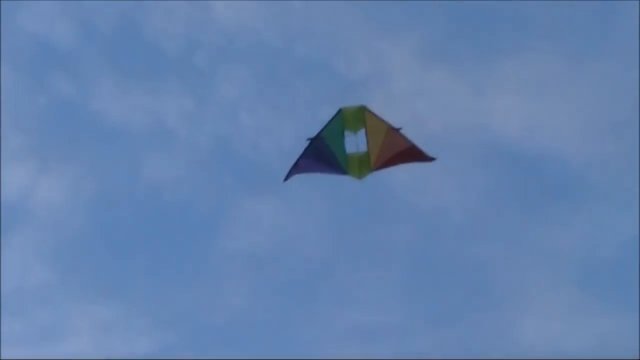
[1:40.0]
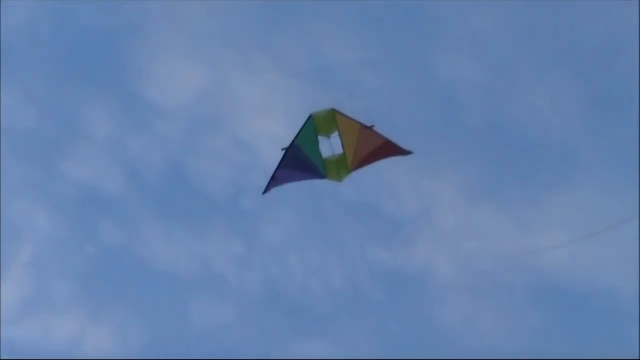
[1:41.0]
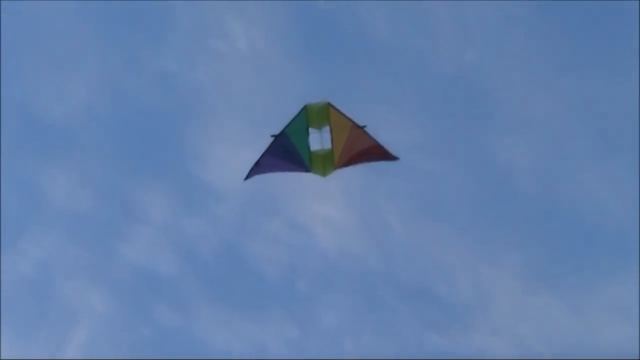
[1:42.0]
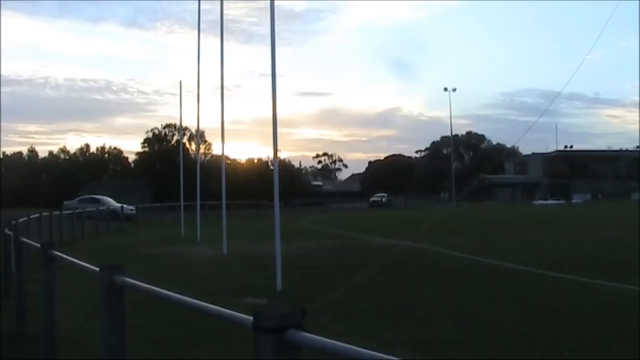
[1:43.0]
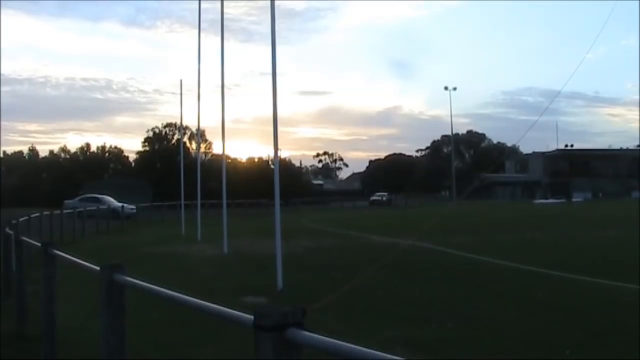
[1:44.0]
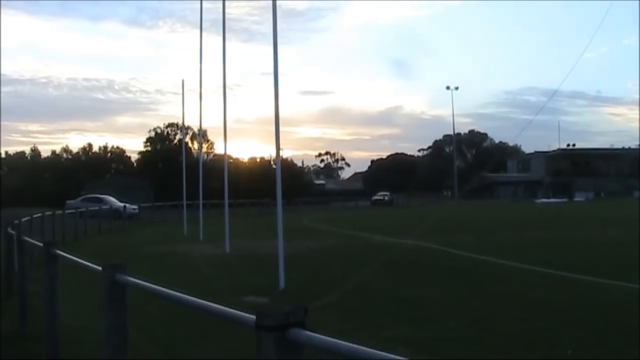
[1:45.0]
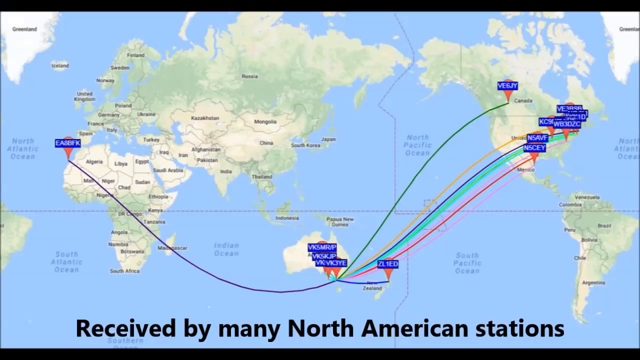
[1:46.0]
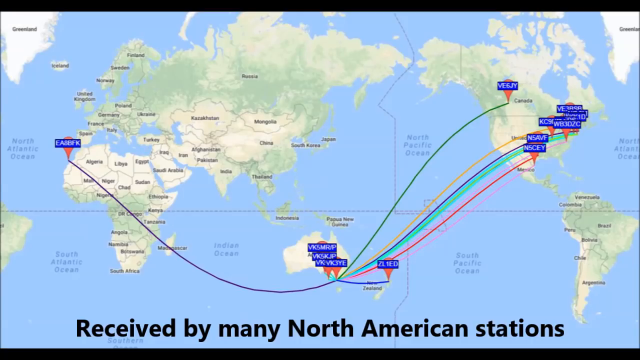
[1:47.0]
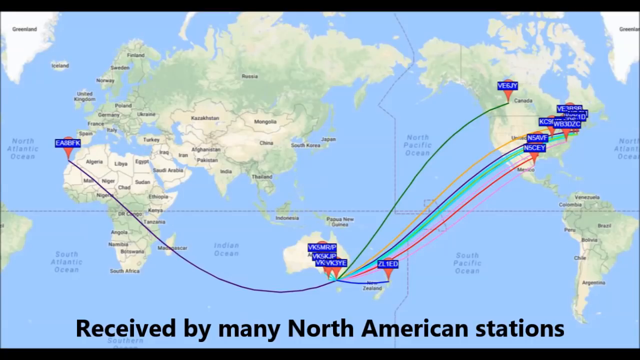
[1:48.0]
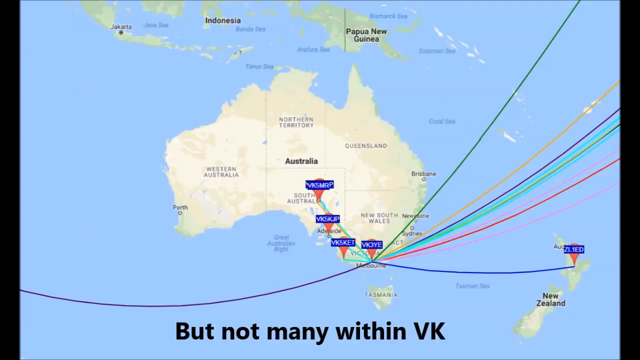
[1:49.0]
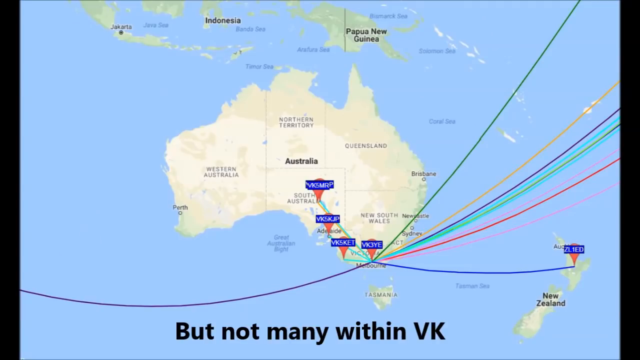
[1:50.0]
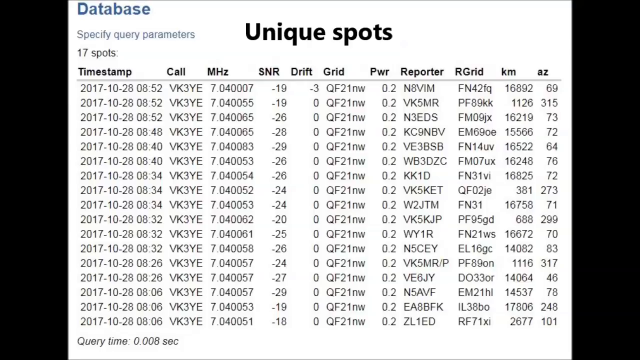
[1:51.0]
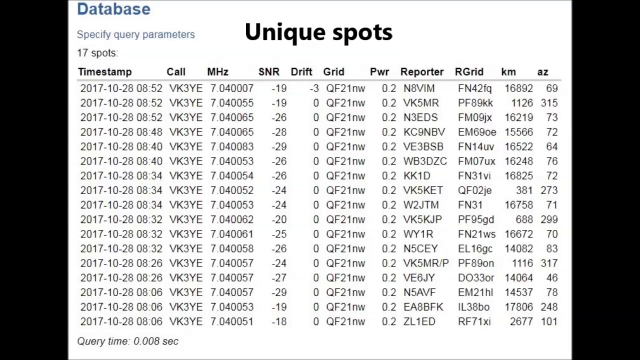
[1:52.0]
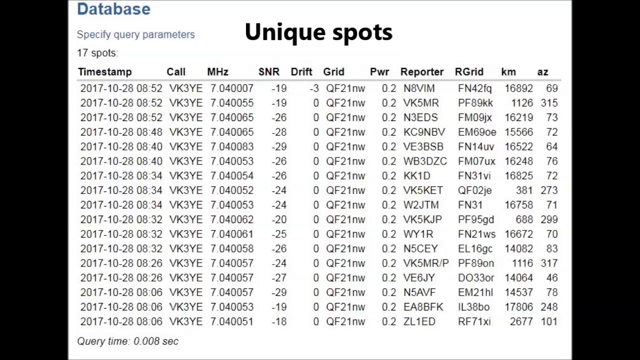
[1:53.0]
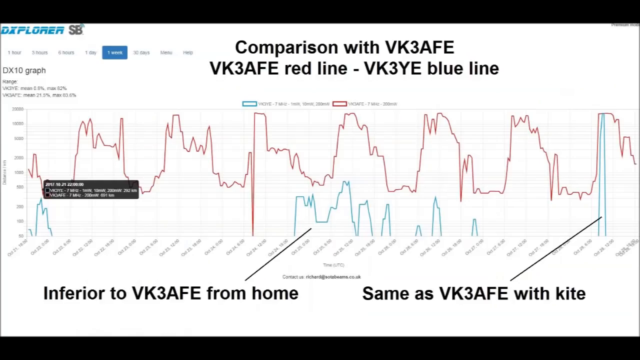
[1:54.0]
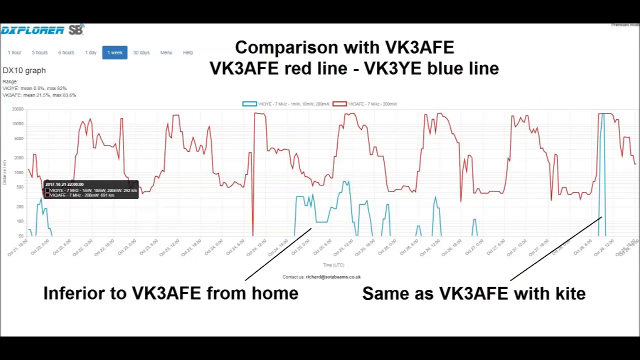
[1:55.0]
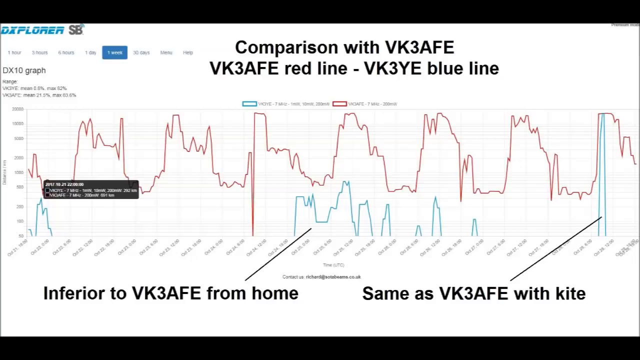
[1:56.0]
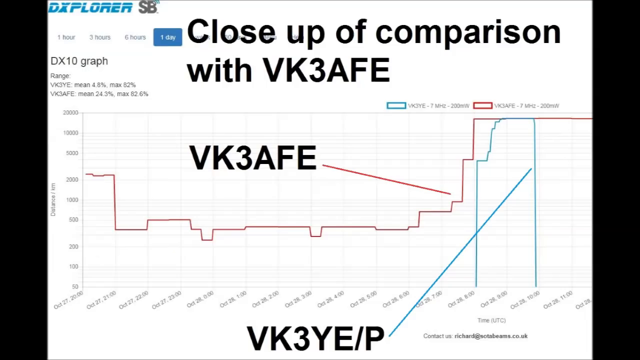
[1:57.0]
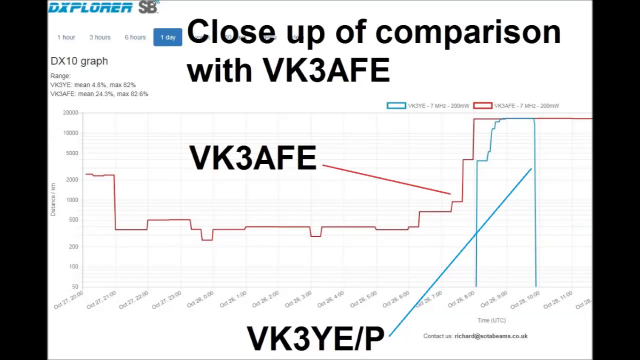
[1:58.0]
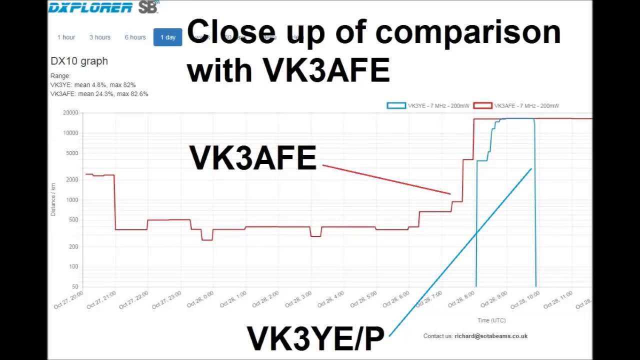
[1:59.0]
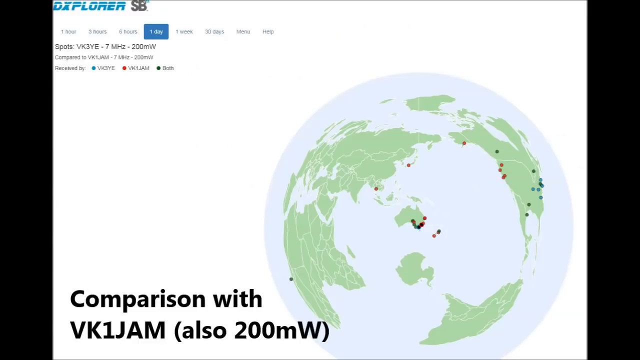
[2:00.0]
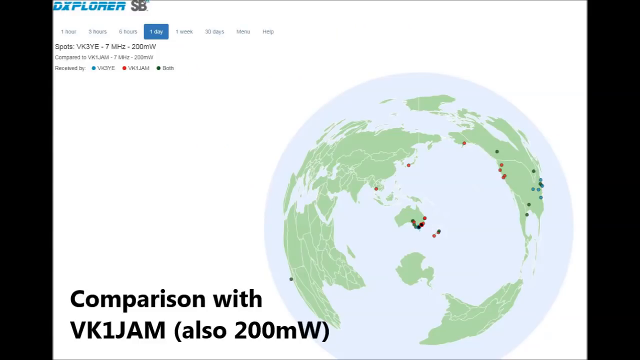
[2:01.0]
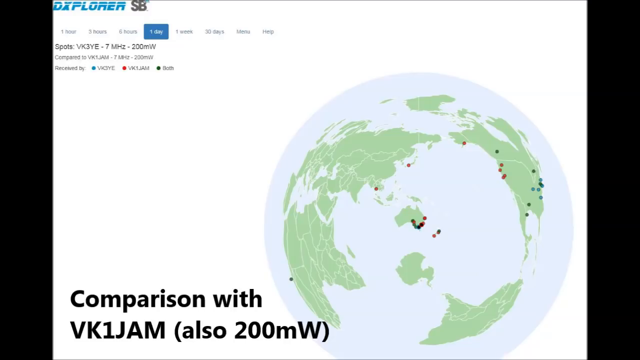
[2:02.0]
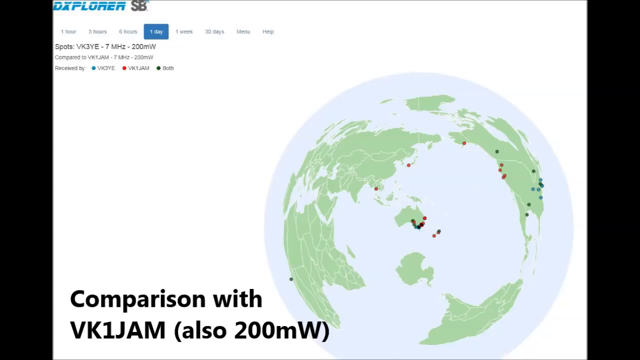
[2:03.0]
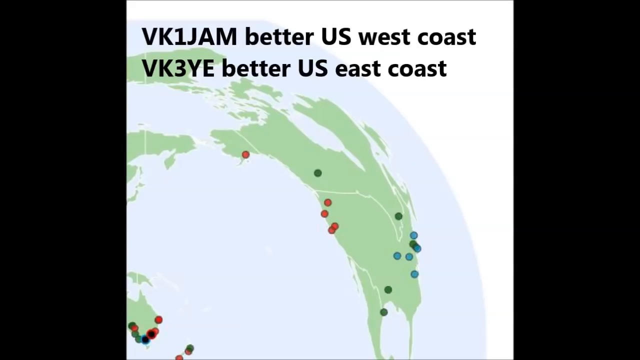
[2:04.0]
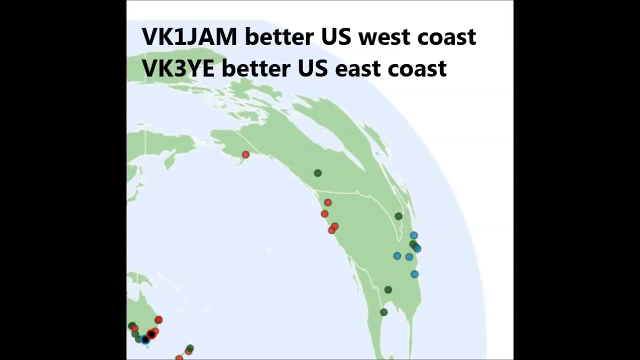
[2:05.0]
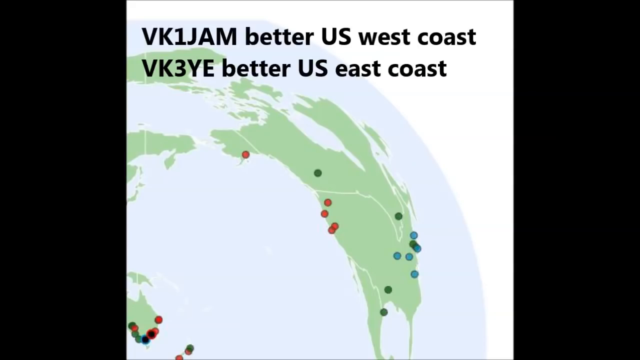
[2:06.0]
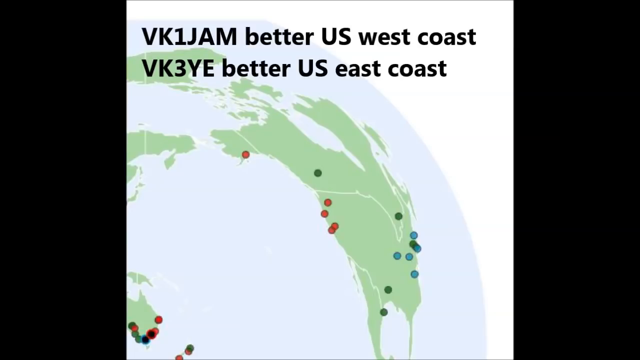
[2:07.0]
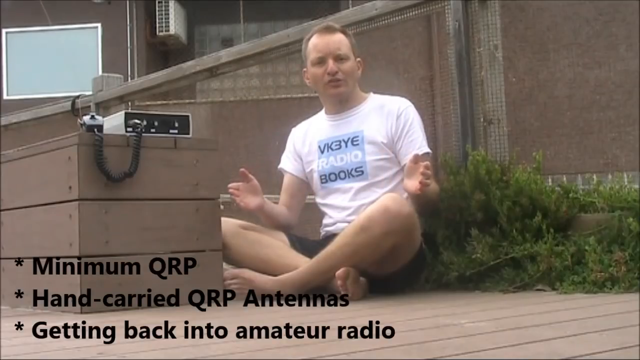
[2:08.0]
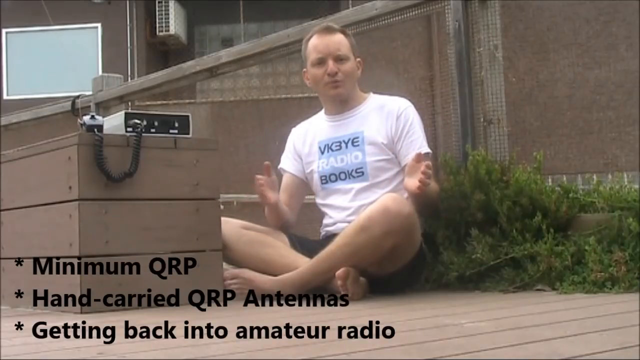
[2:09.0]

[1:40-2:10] The triangular rainbow kite flies in a very blue sky, which now has many faint white clouds. The video cuts to a field, where the kite is tied to a post fence with a metal railing at the top; the trees and fence suggest the place is Australia rather than America. A football or soccer field is shown, with four apparent flagpoles on the left and two cars in the background, and it looks like sunset. Then a map of the world appears, with different spots highlighted by red teardrop-shaped markers pointing down, apparently with different frequencies on them, and lines that bend toward Australia and all meet there.